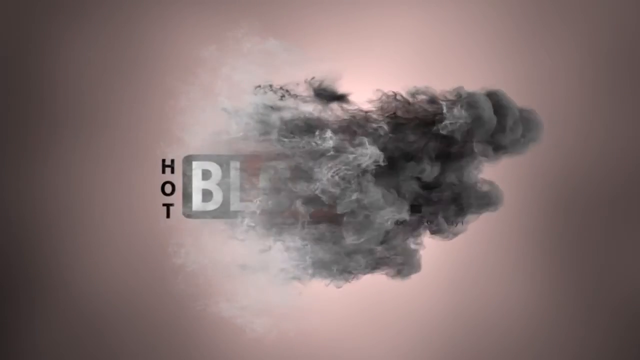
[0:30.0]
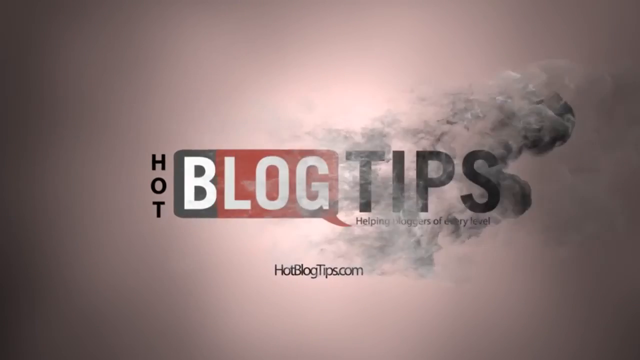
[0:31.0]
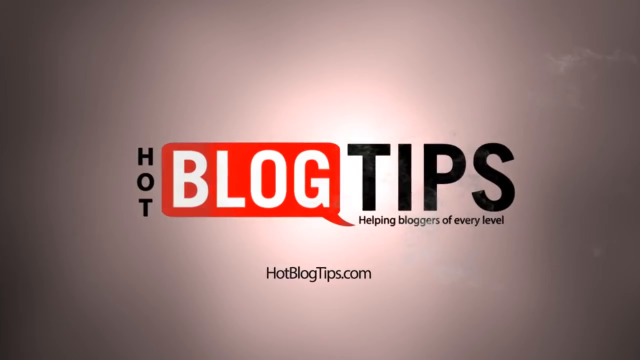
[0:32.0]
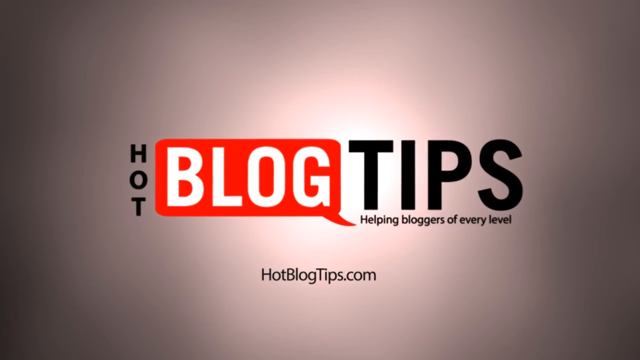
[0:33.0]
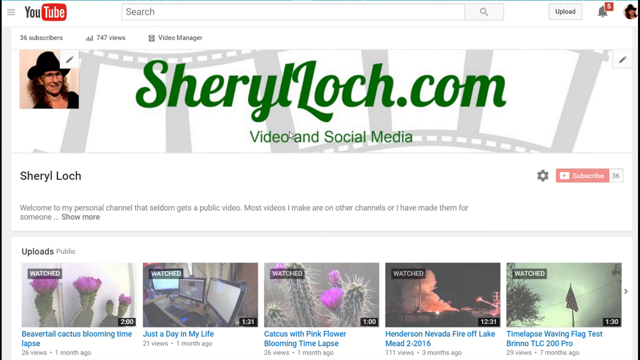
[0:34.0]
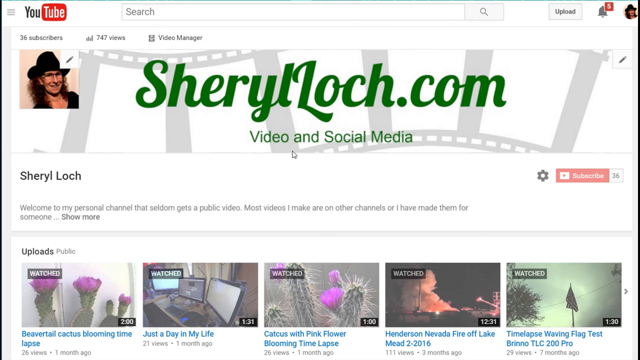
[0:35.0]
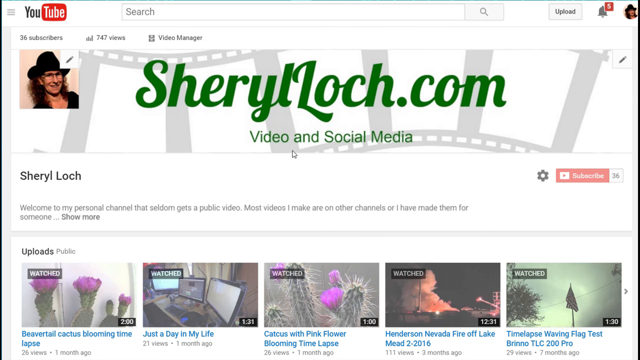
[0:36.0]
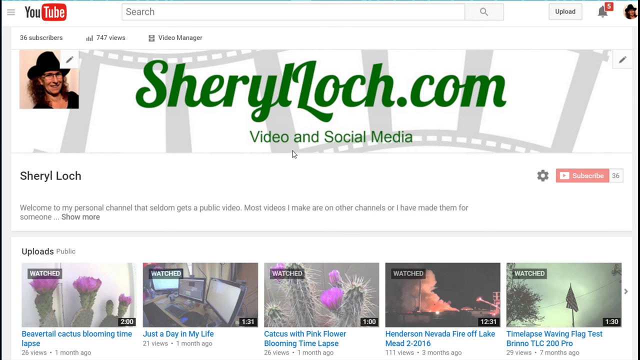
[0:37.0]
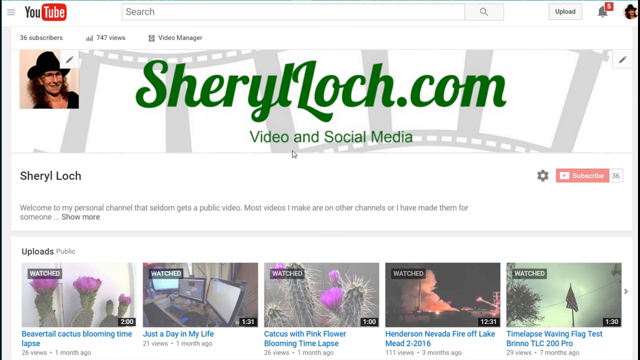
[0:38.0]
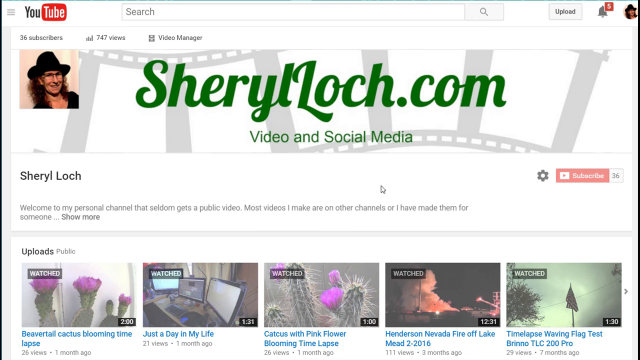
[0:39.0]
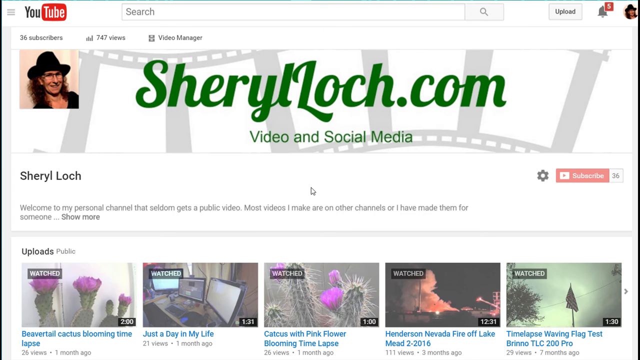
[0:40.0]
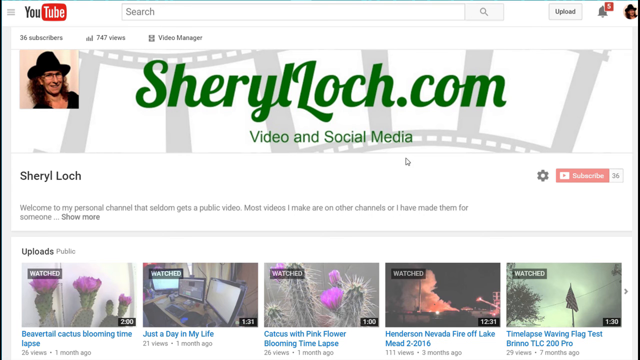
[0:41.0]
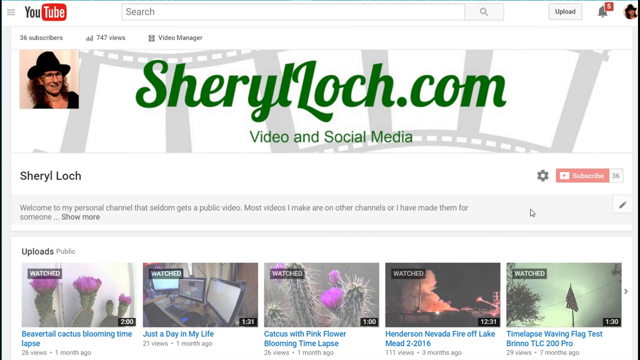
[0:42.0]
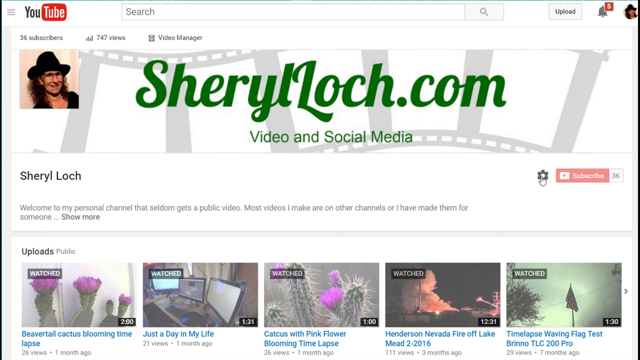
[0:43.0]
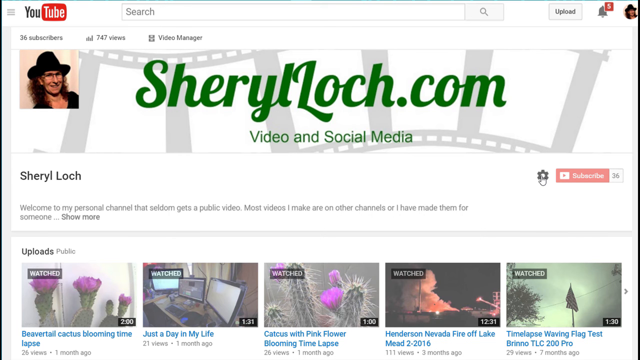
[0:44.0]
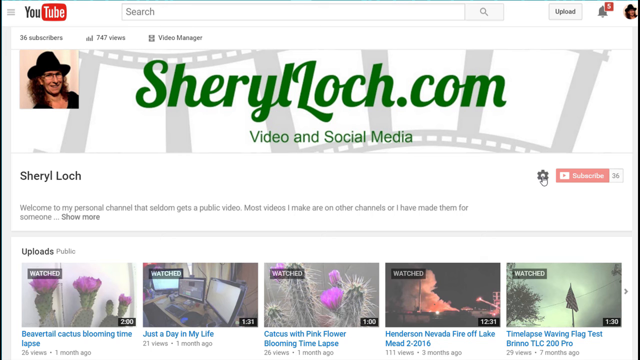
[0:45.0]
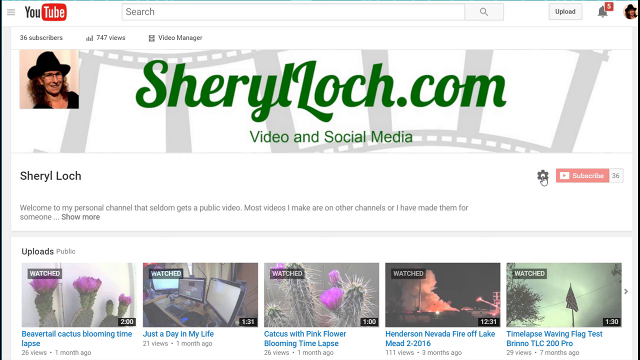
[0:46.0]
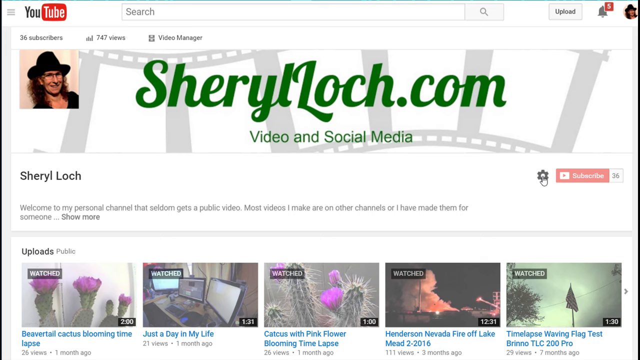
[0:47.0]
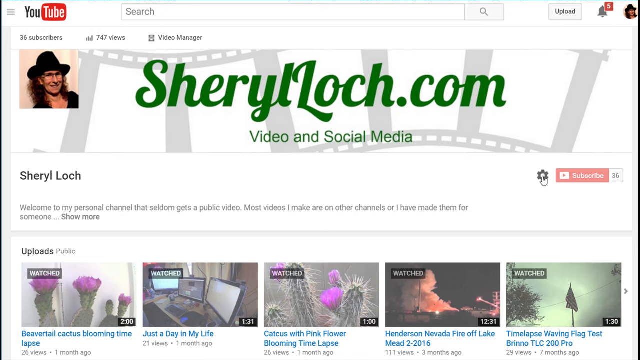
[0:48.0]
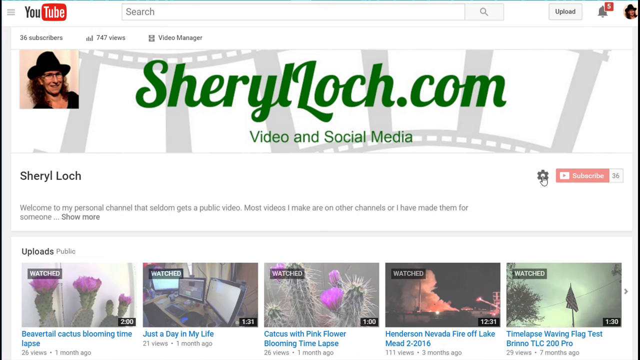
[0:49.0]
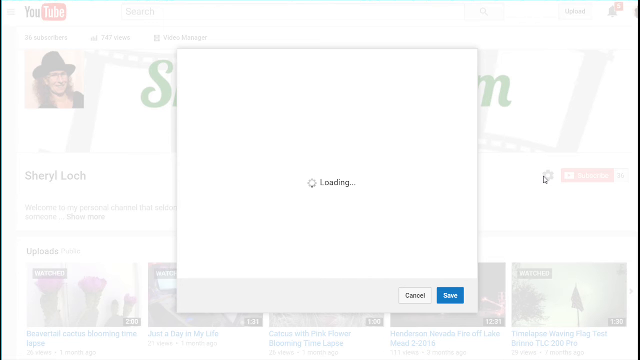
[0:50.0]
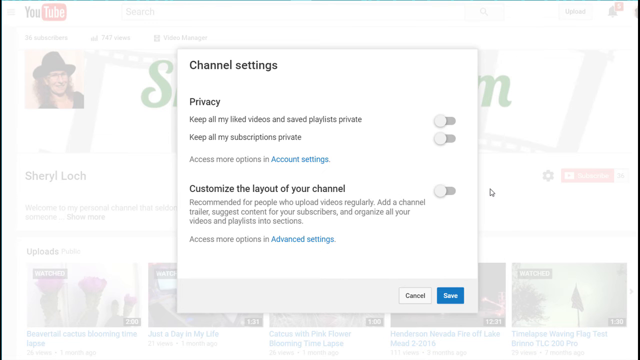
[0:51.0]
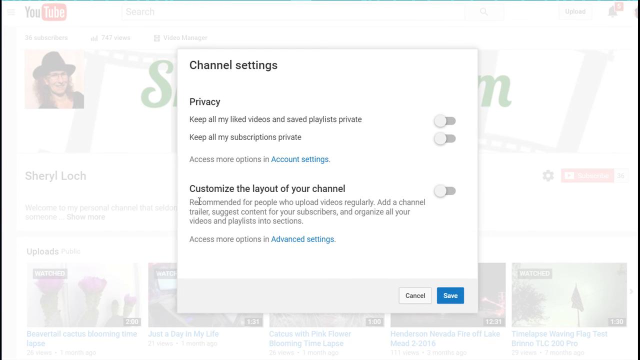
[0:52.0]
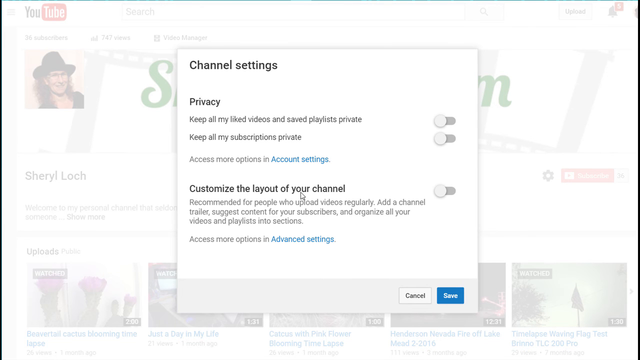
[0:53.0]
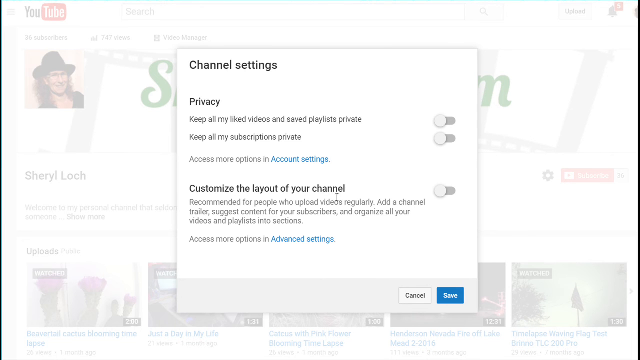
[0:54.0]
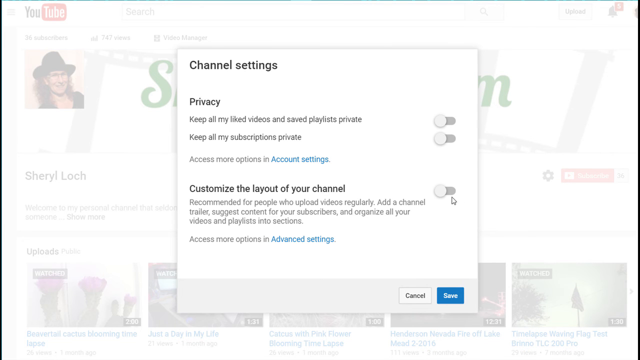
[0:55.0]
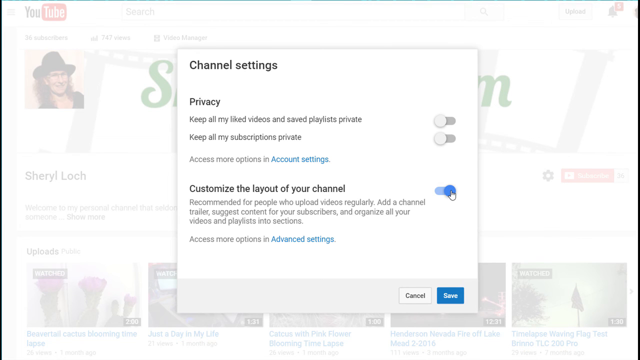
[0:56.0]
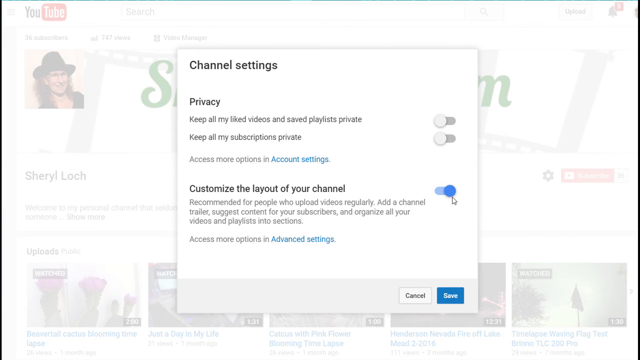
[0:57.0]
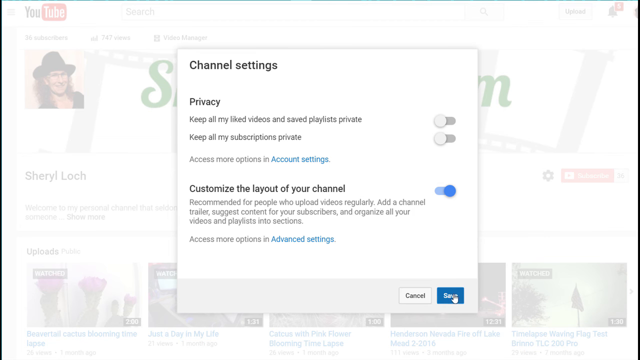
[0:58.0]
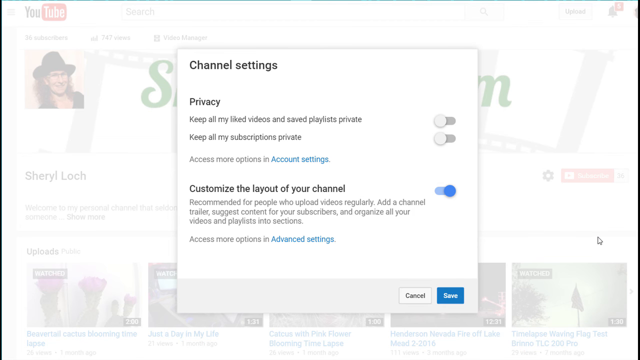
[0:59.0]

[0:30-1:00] The "hot blog" logo appears, and the view returns to the cheryllock.com video and social media web page. The cursor hovers over the settings button, the channel settings come up, and the cursor hovers around that area. The hot blog icon shows a gush of what looks like grey smoke; the smoke clears away and the hot blog tips become more visible. On the home page of "cheryllock.com, video and social media", the cursor hovers on the page and then clicks the "channel settings" button, which says "customise the layout of your channel", selecting that option.